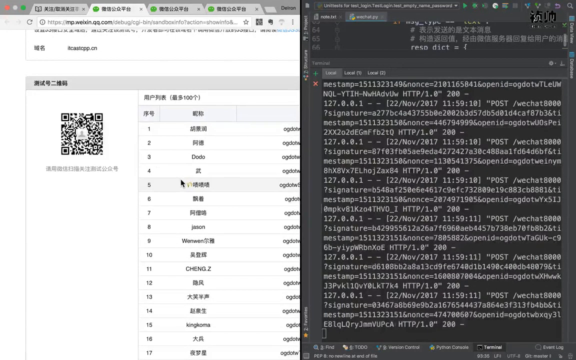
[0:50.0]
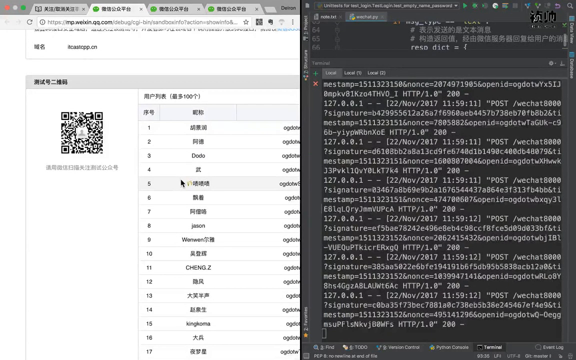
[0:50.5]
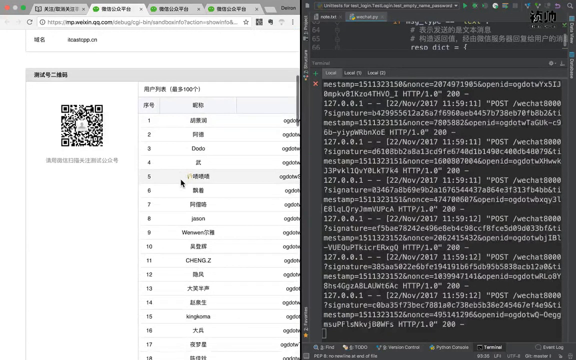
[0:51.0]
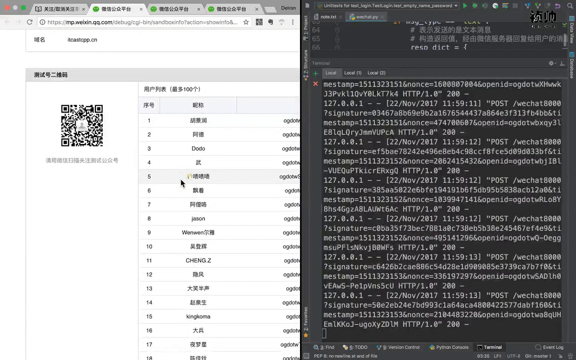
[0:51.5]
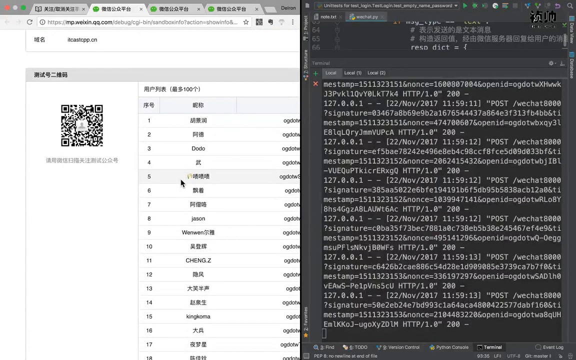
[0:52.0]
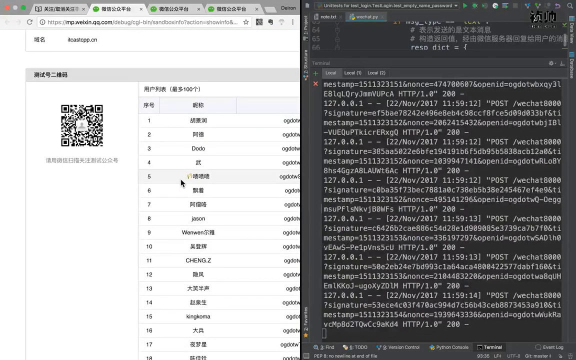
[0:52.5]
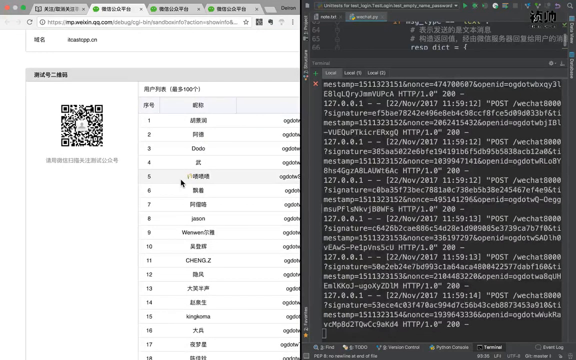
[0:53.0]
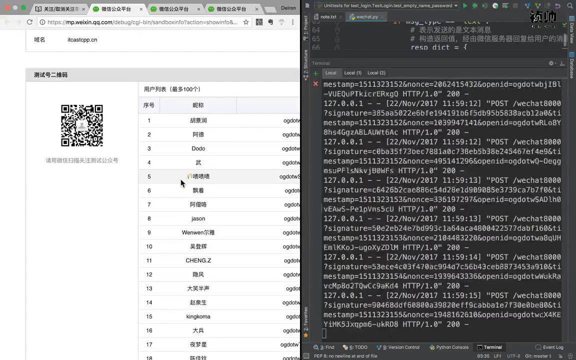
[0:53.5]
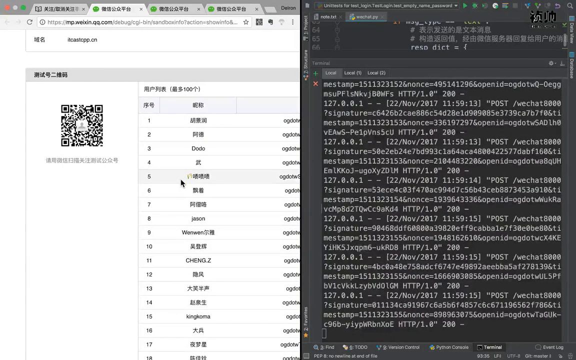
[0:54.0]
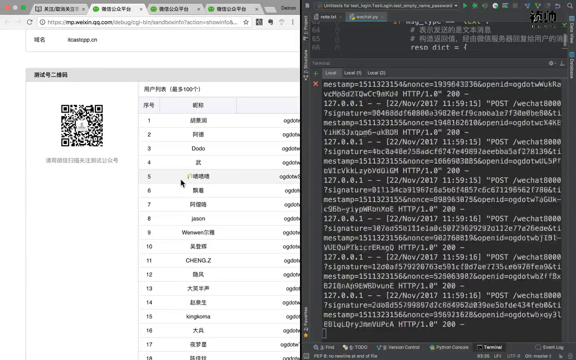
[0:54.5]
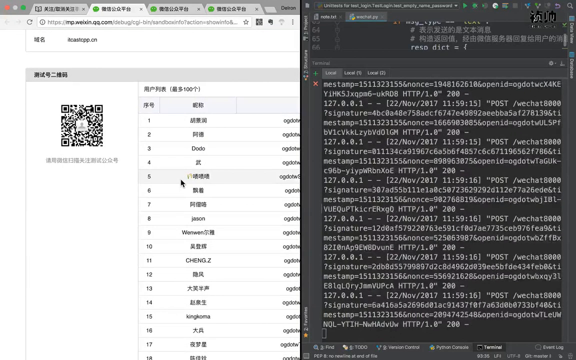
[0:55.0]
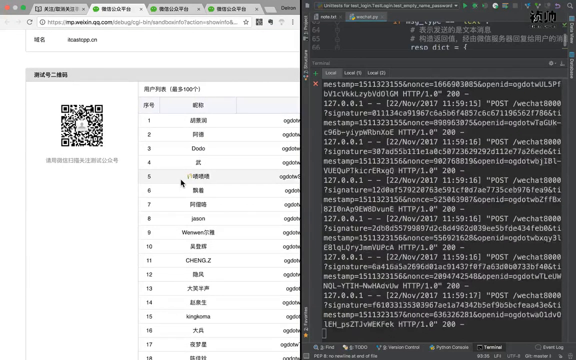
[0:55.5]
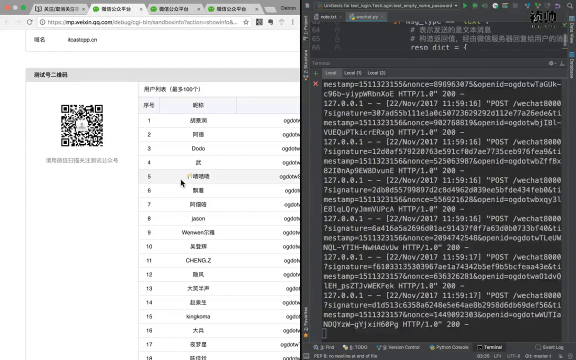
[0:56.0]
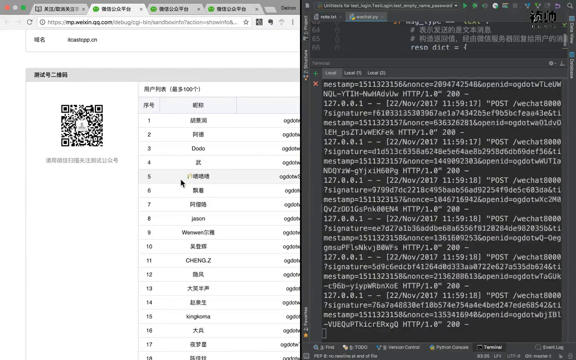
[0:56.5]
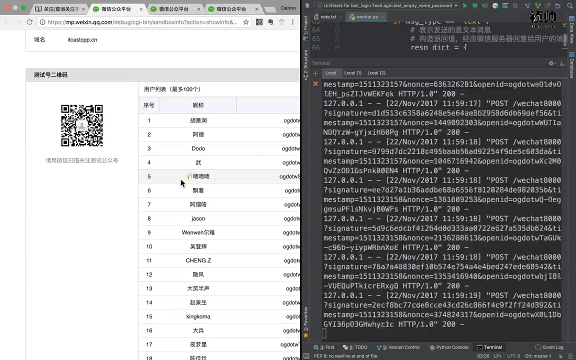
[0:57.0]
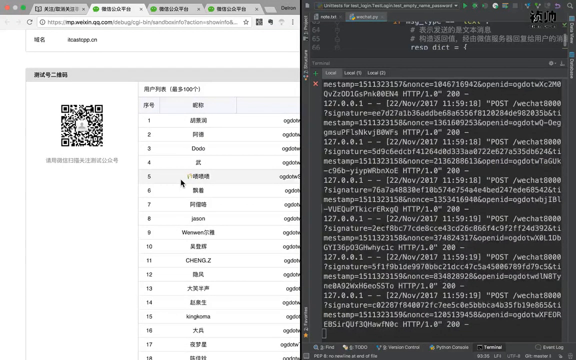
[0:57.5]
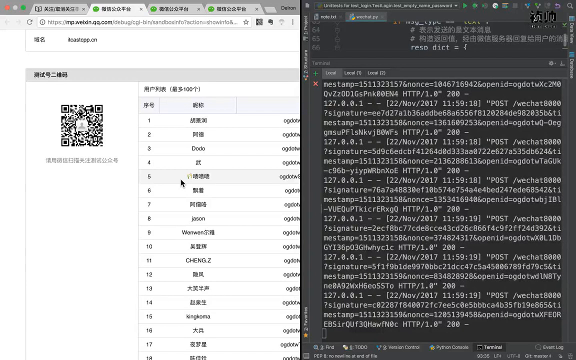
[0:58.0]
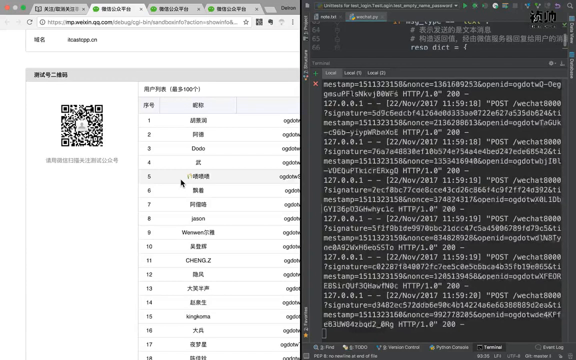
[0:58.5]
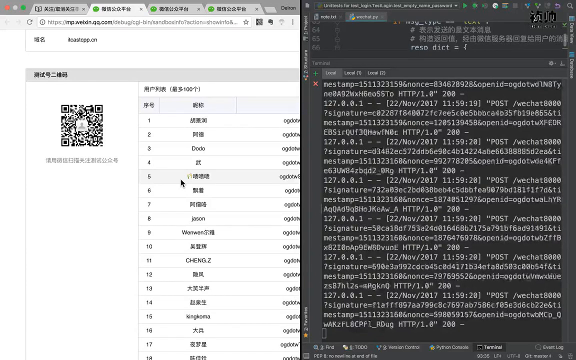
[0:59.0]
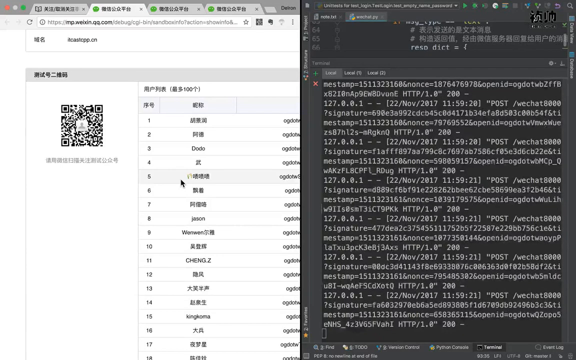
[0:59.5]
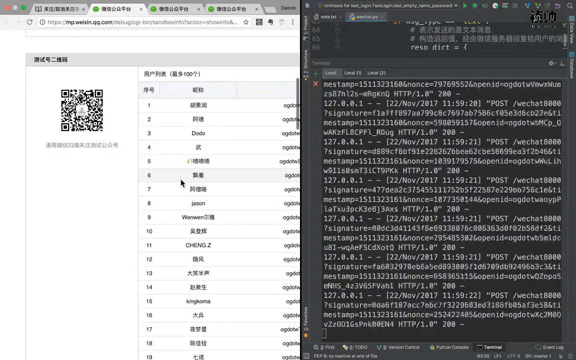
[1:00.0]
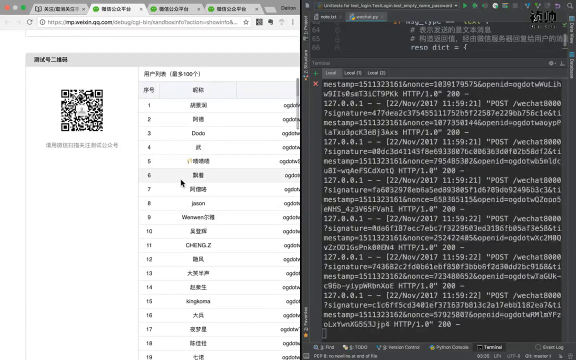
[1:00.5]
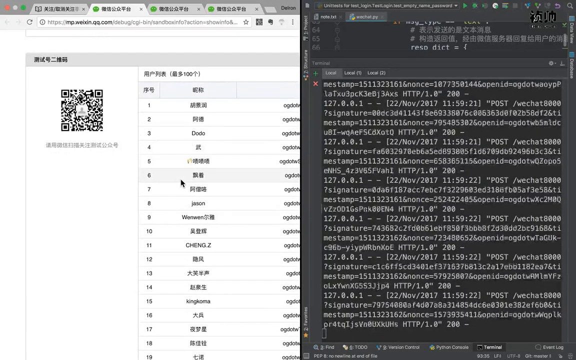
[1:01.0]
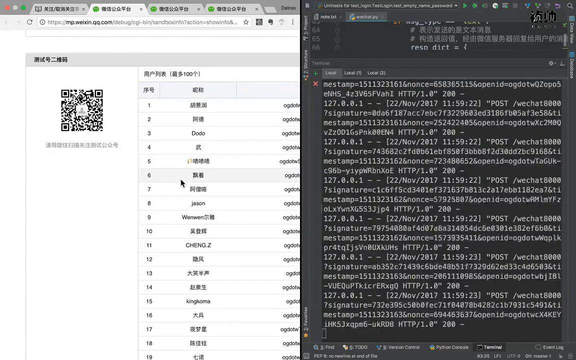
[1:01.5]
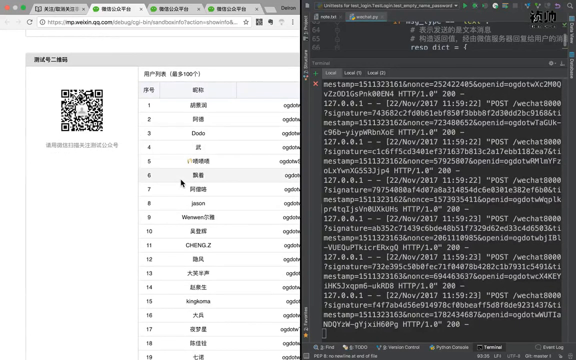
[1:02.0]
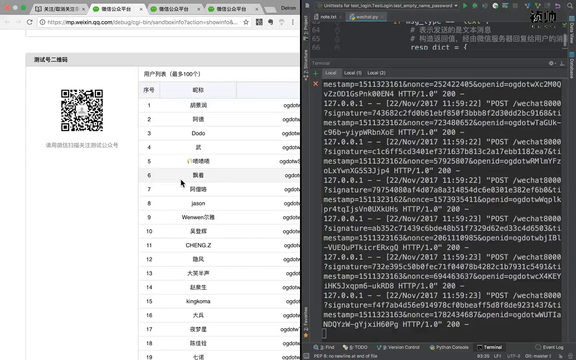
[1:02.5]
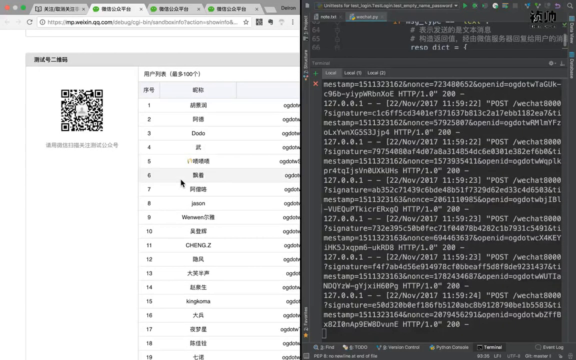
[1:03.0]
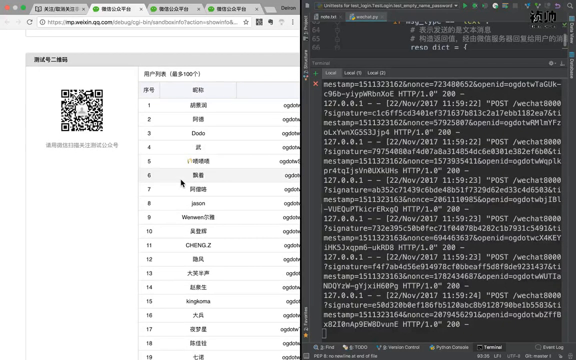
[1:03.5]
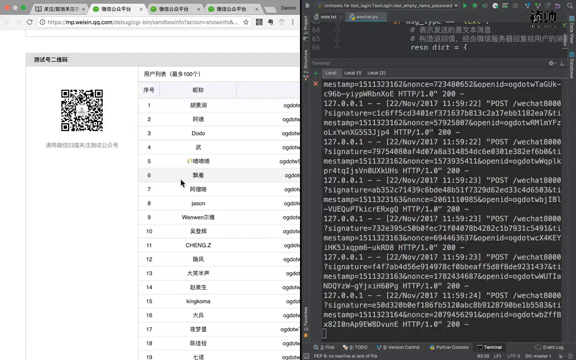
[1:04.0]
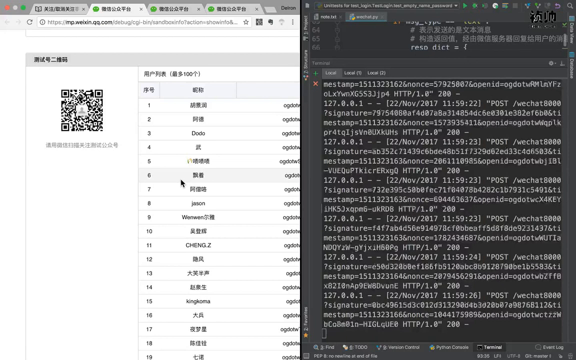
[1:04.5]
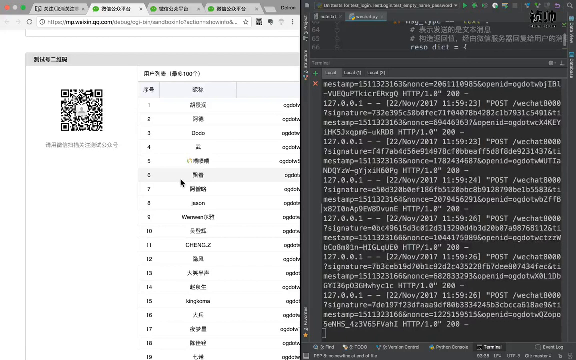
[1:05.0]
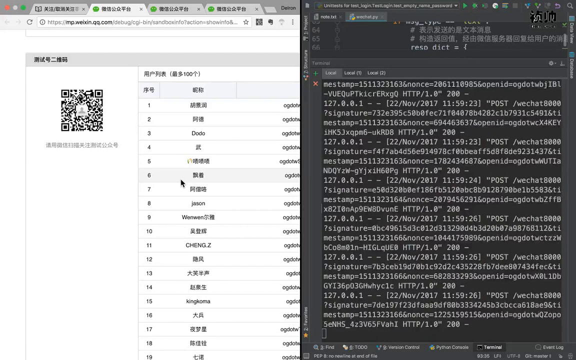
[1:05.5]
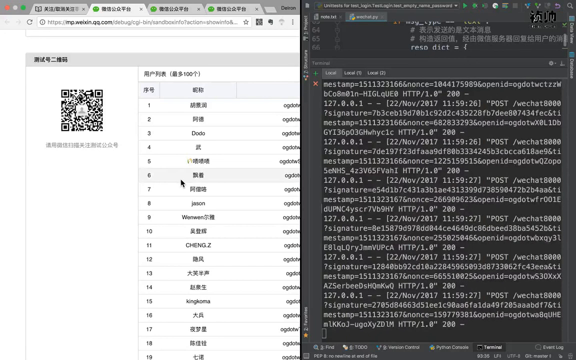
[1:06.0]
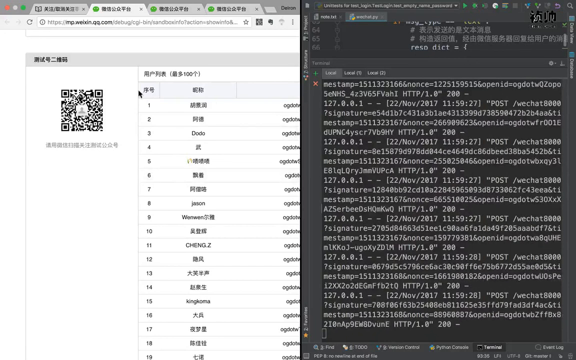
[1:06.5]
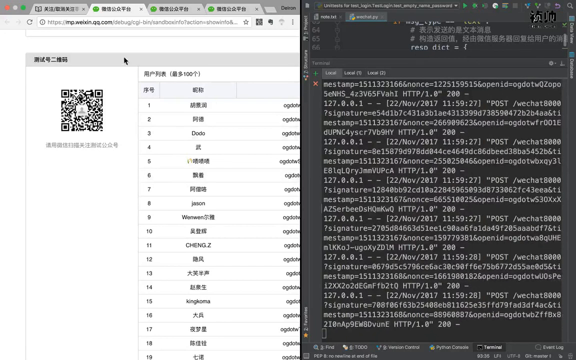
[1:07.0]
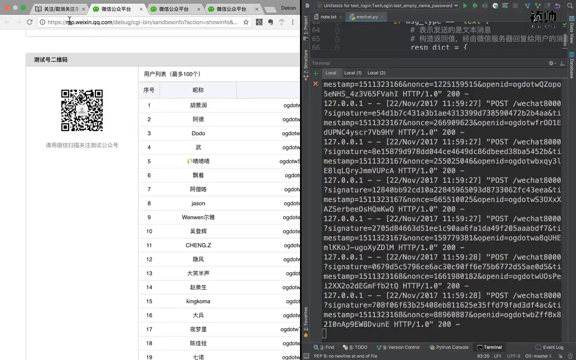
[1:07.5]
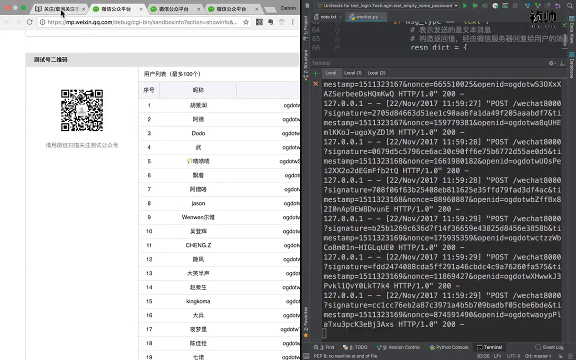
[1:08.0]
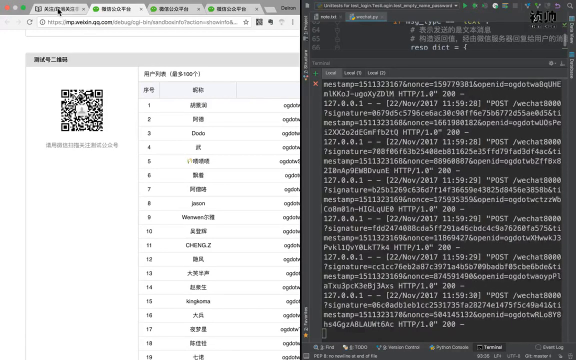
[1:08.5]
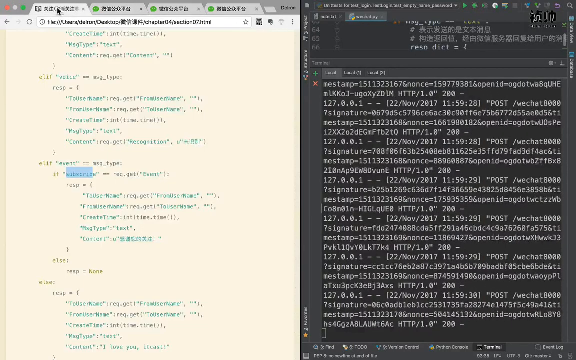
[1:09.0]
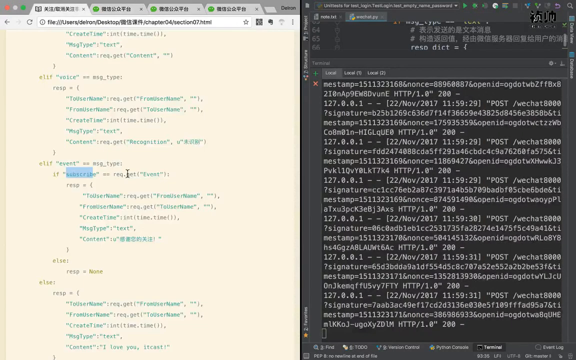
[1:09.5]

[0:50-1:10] More output keeps appearing in the program. The mouse cursor moves a bit and hovers over the fifth row on the left side, which has some Chinese text on it. He then scrolls down to the sixth choice, possibly looking for a specific line, and then clicks on the first tab at the very end. The right side still shows the code constantly outputting more lines, apparently about two sets of lines every millisecond, with each line having multiple numbers.